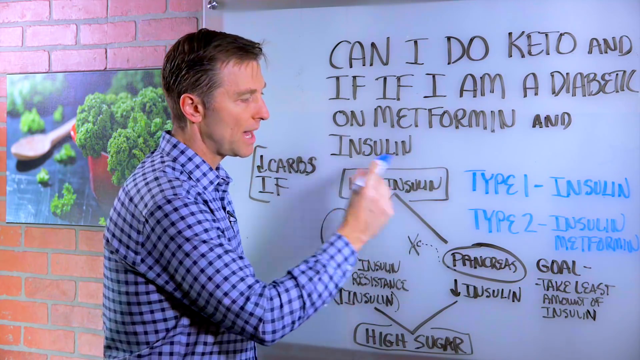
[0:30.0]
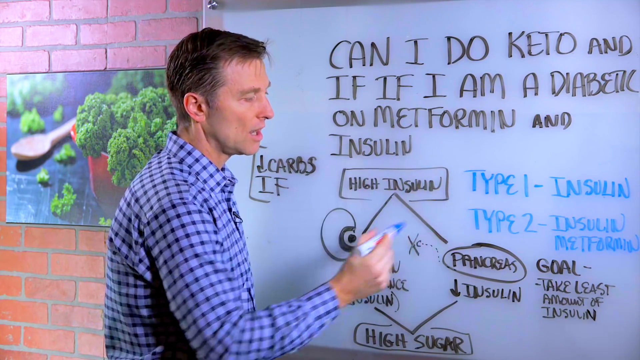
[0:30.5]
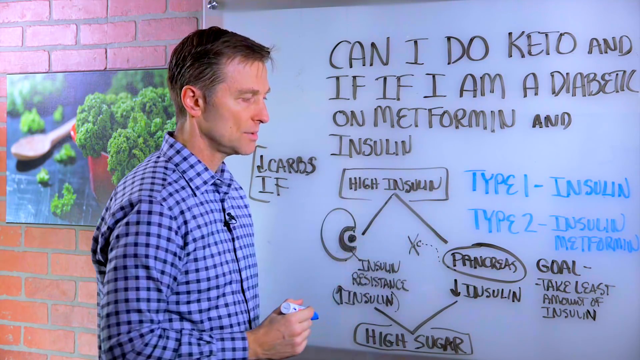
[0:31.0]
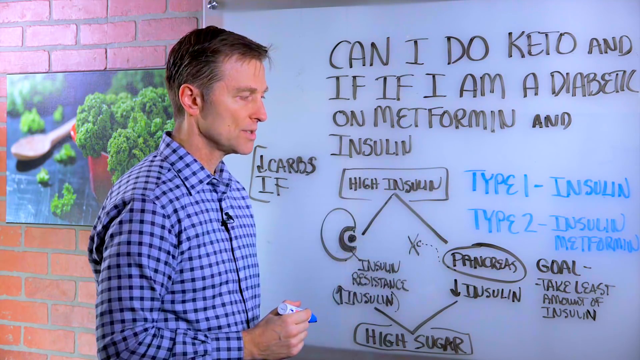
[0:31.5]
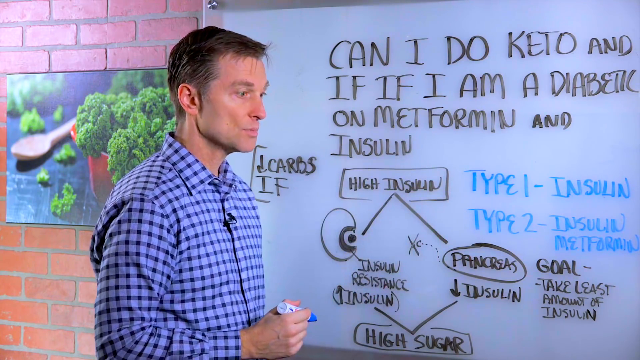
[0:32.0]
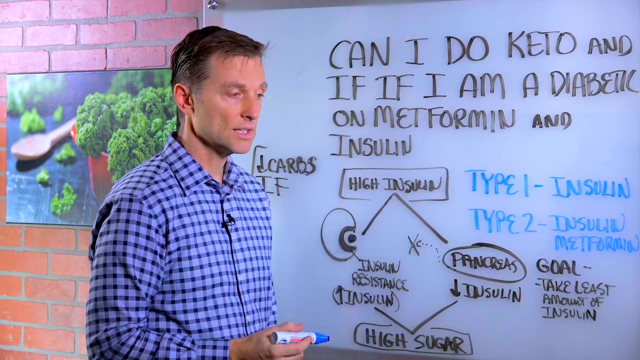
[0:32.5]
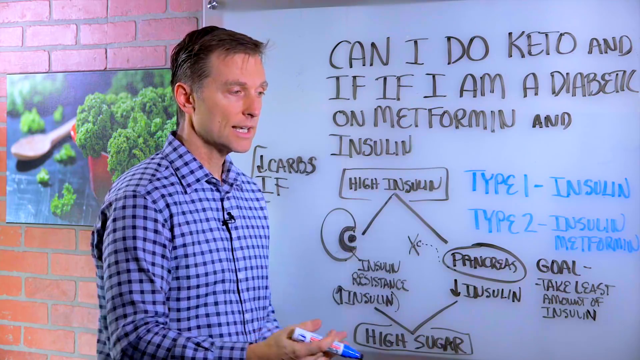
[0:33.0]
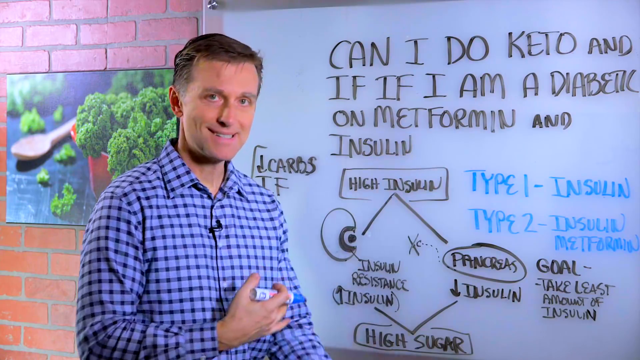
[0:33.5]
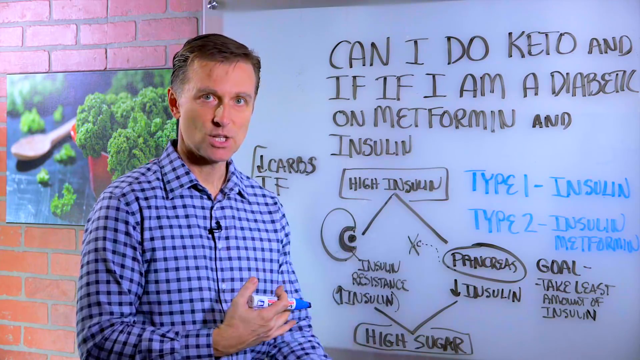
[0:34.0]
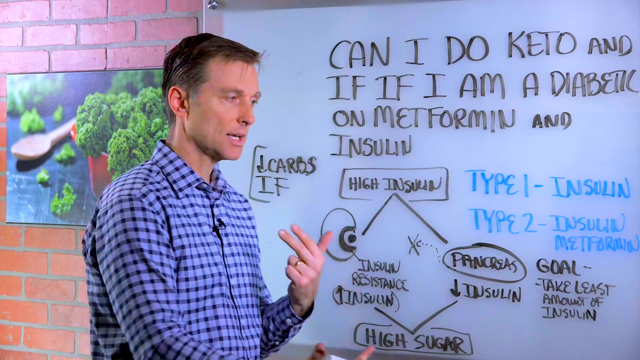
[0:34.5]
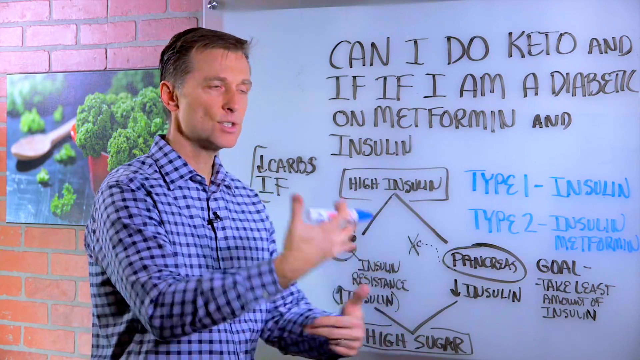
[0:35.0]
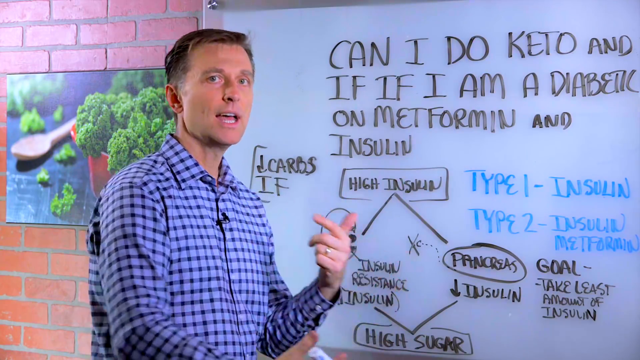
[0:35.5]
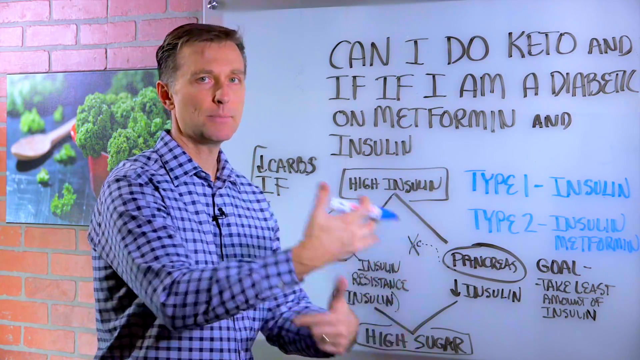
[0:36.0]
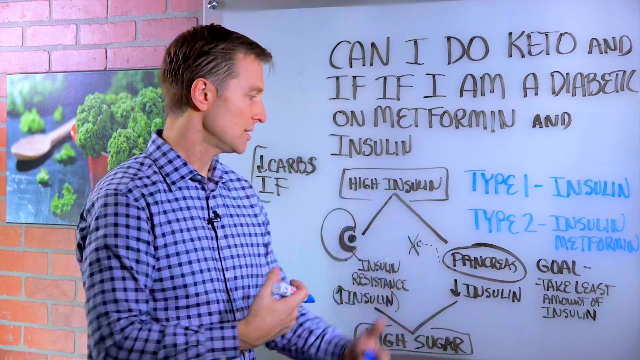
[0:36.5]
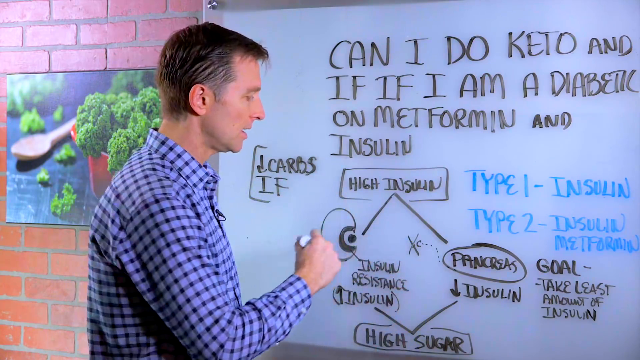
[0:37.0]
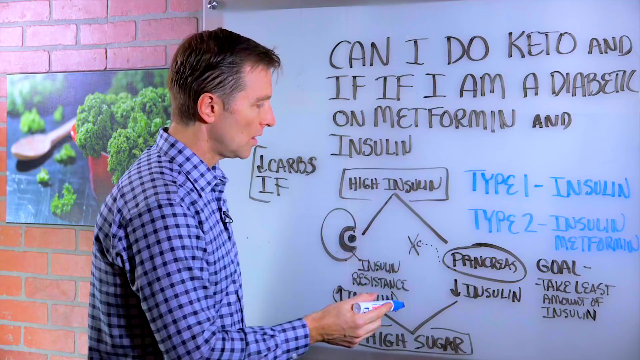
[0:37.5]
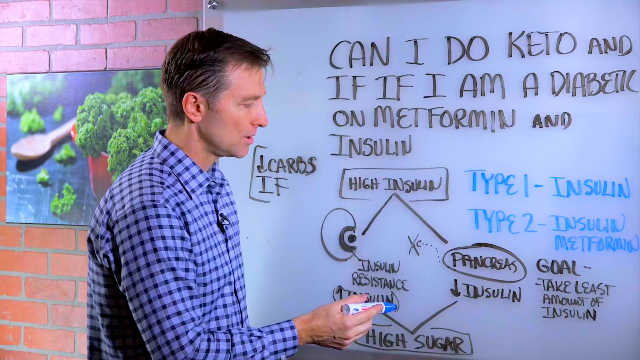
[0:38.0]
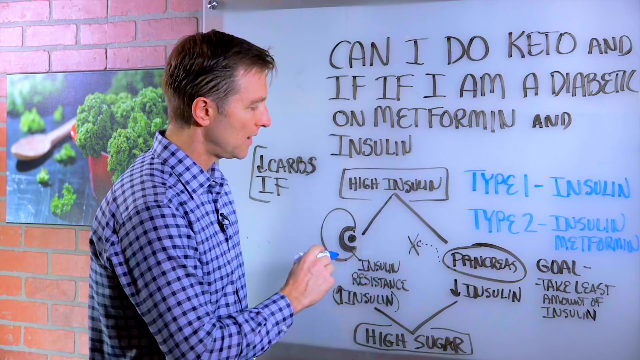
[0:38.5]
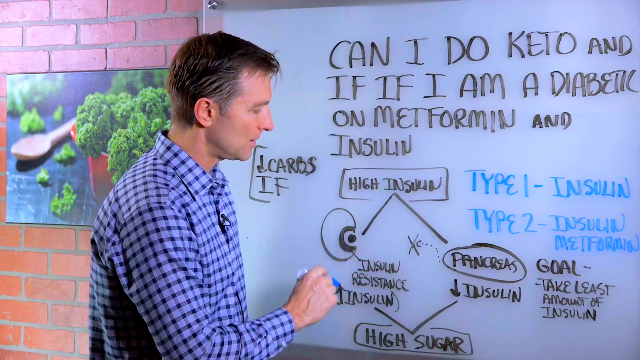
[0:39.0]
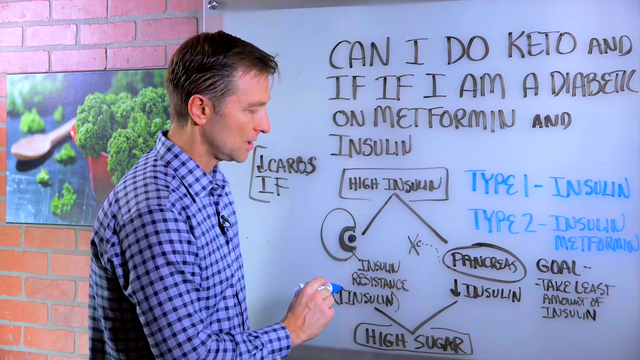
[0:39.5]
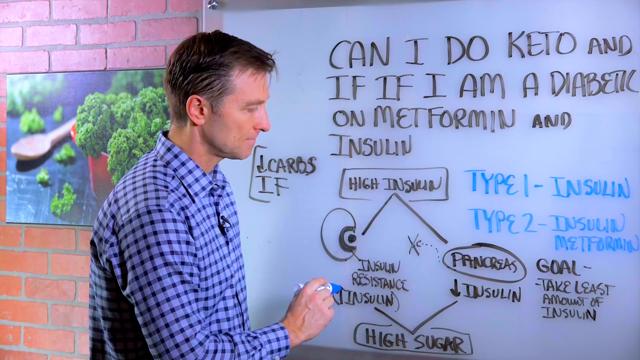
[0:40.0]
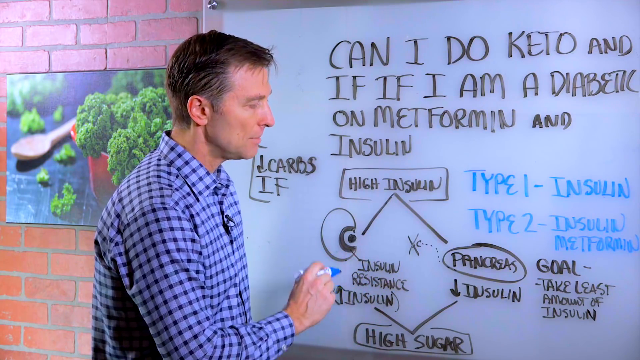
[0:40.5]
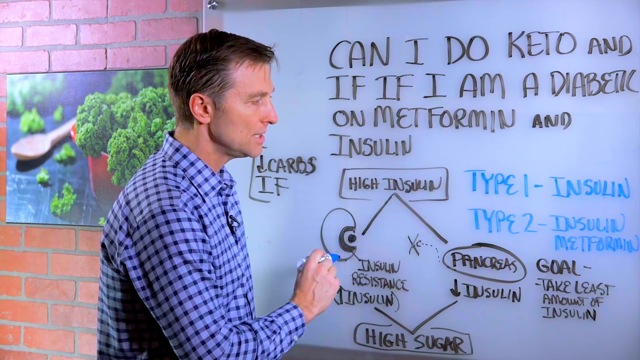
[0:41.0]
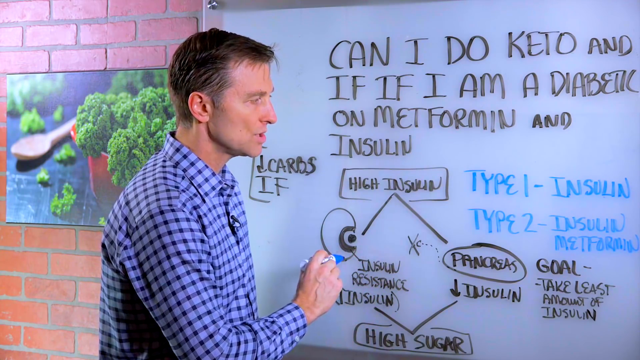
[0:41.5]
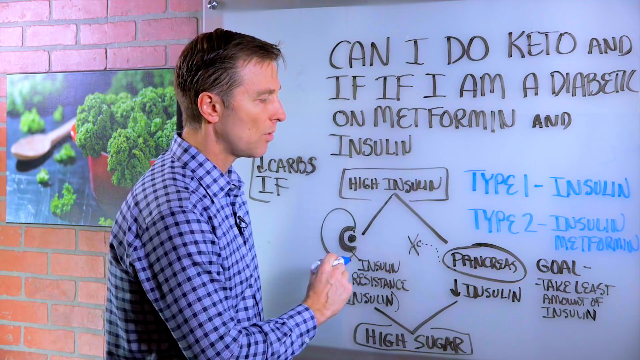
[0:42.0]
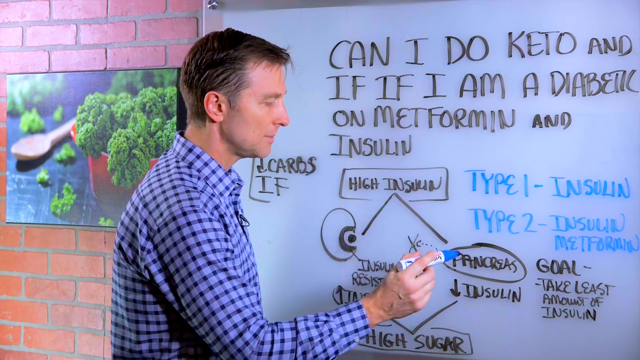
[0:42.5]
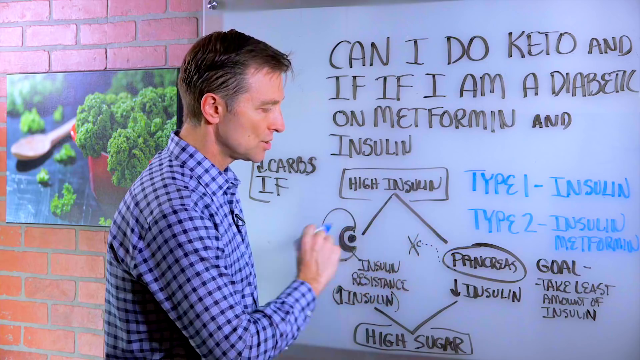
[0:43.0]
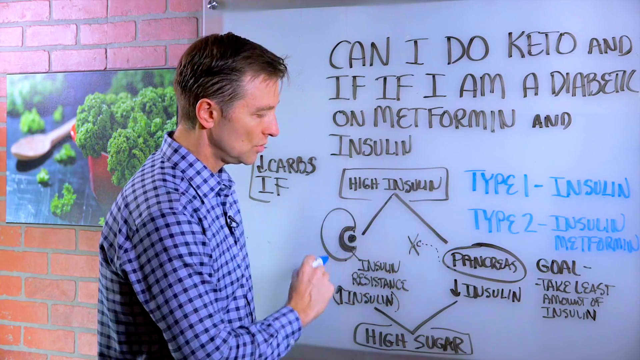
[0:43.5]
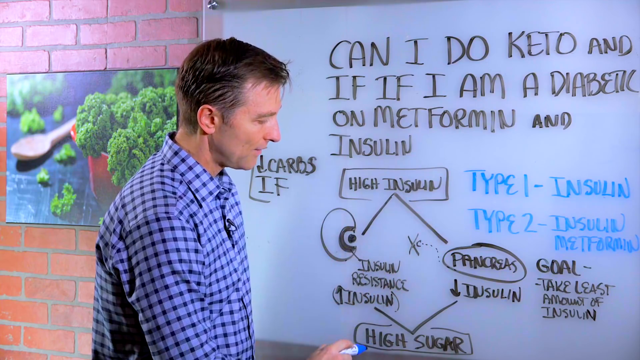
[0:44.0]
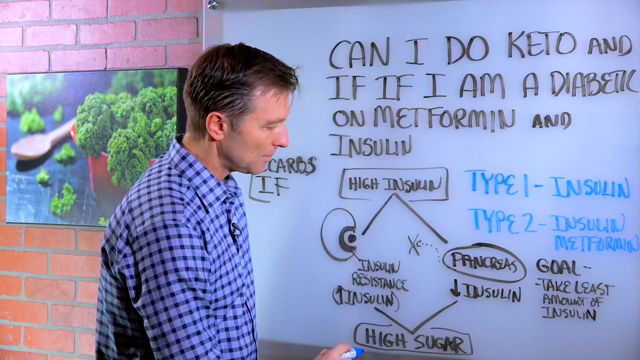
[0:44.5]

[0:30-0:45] Holding a blue marker to the whiteboard, the man stands before a board where something looks like it was added next to the pancreas, like an X and a C. He moves his hands toward himself as he explains, in a bringing-it-back-to-him way. He highlights type 1, then points to high sugar and to high insulin on the whiteboard. His focus seems to stay on type 1, since he keeps pointing back to it, and the diagram is his main focus.